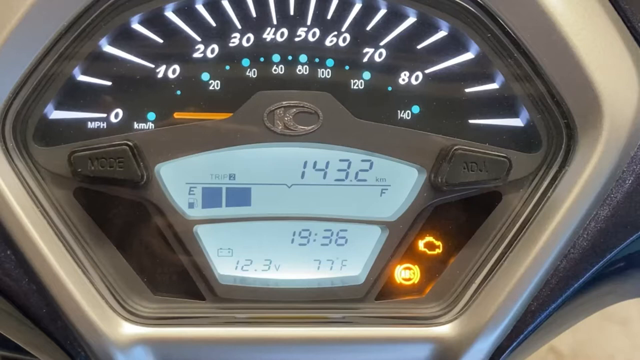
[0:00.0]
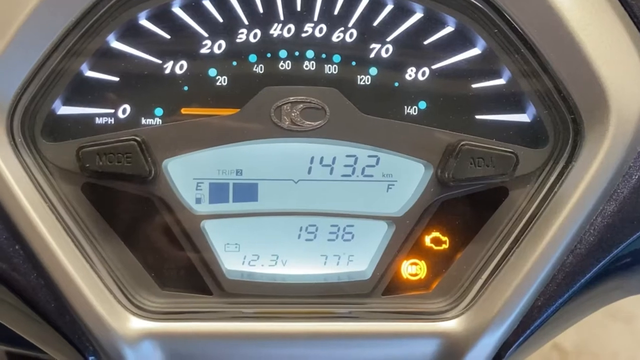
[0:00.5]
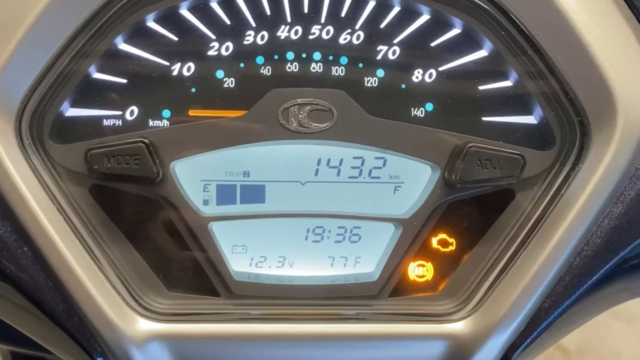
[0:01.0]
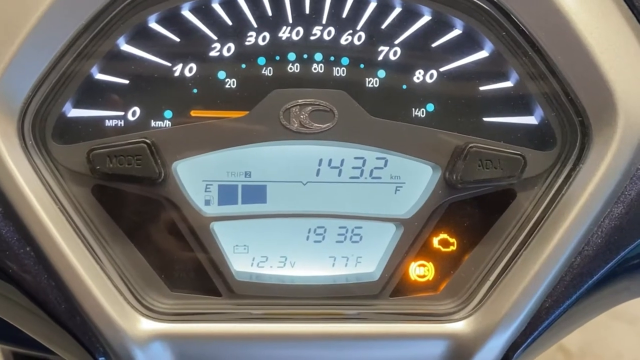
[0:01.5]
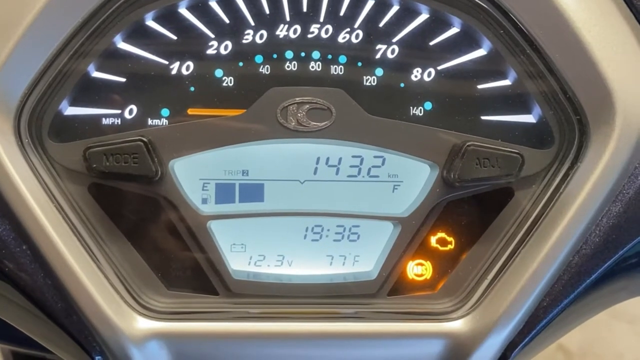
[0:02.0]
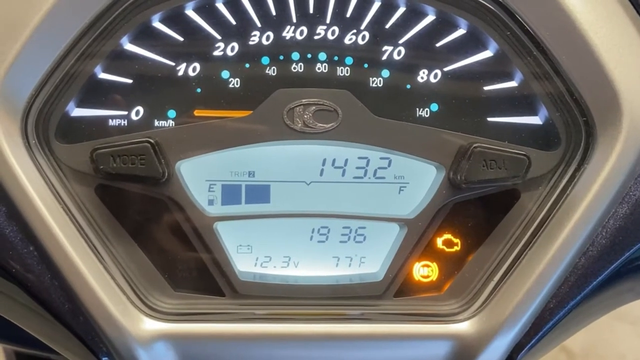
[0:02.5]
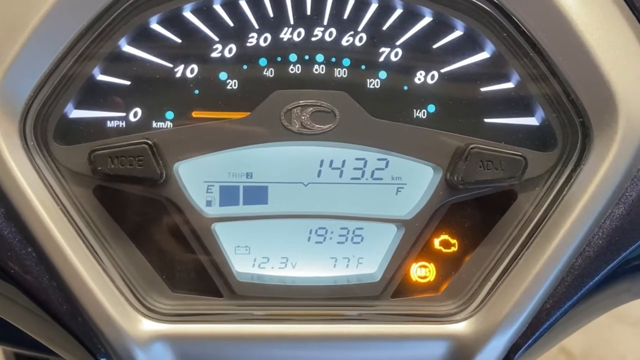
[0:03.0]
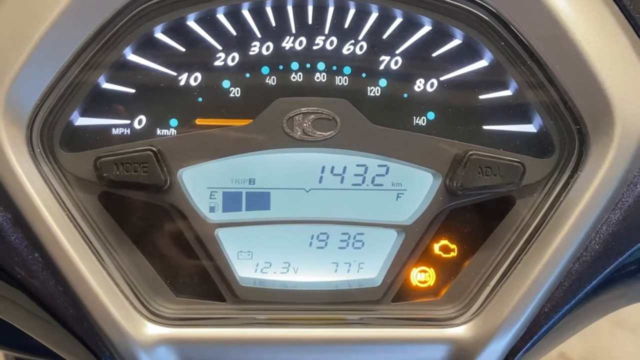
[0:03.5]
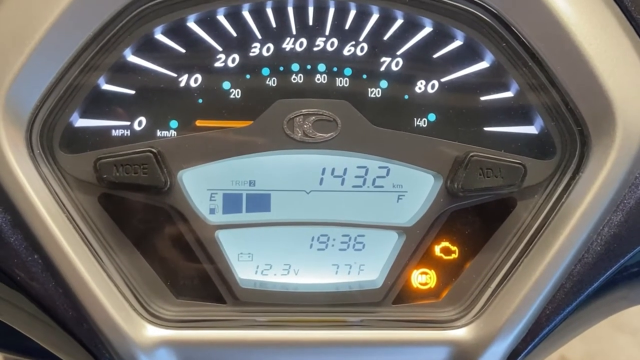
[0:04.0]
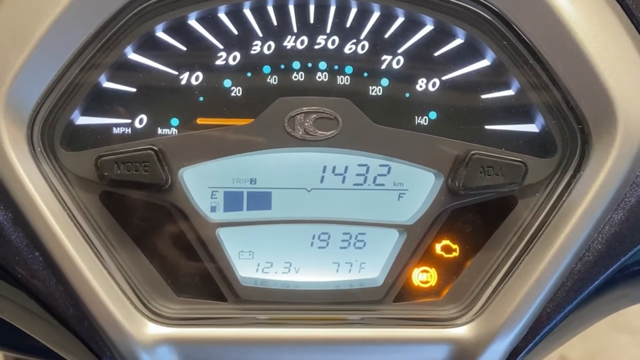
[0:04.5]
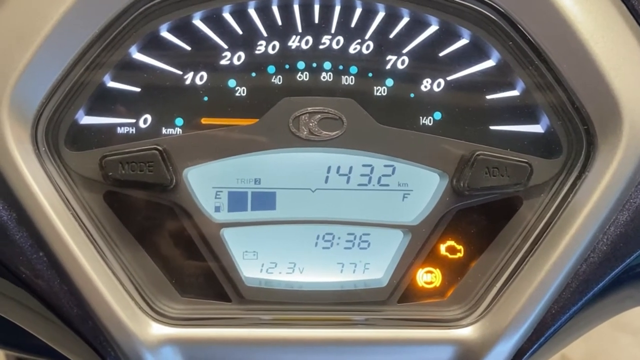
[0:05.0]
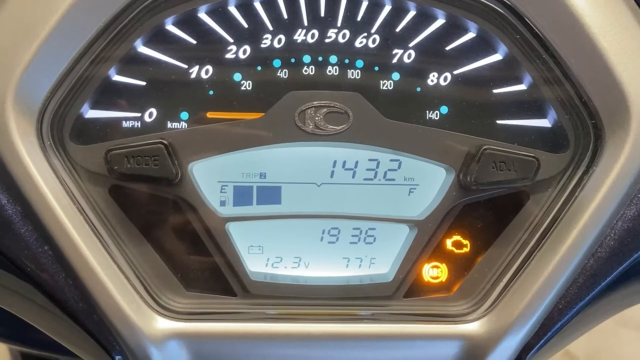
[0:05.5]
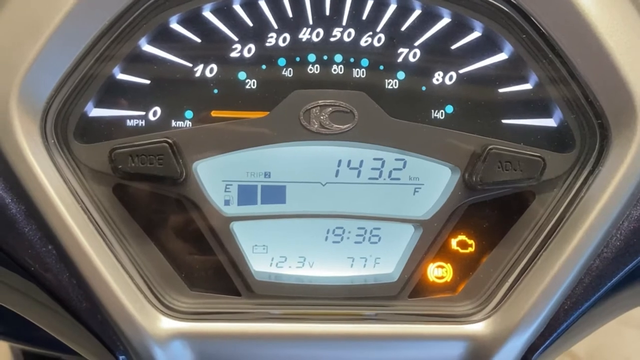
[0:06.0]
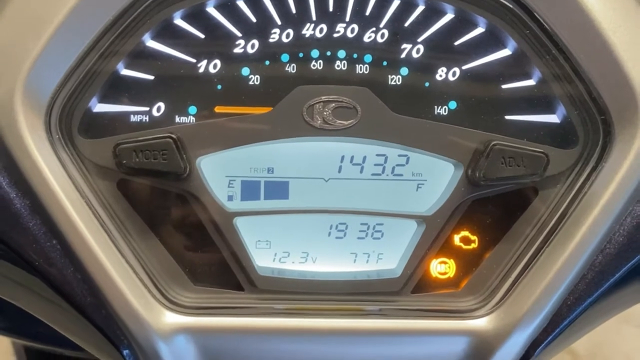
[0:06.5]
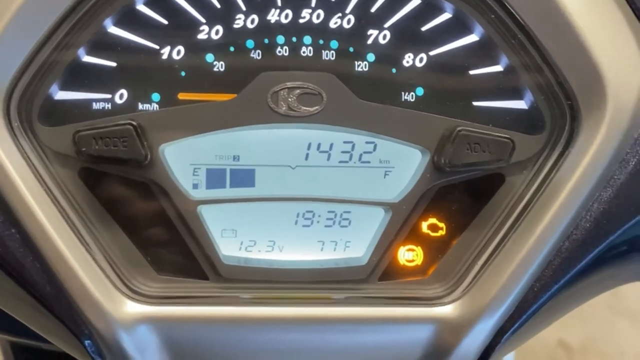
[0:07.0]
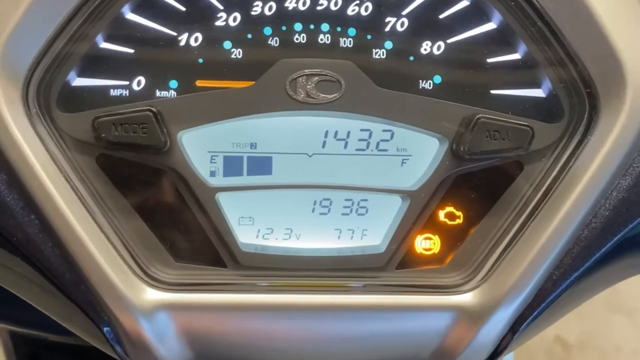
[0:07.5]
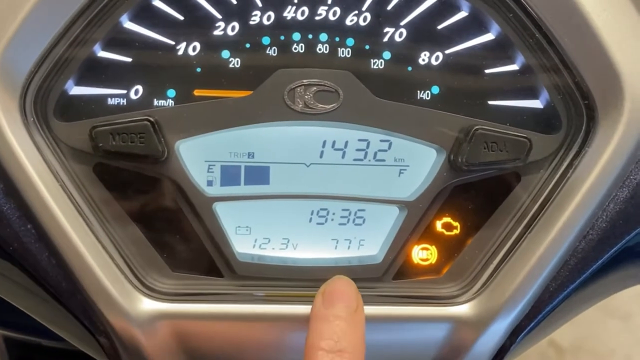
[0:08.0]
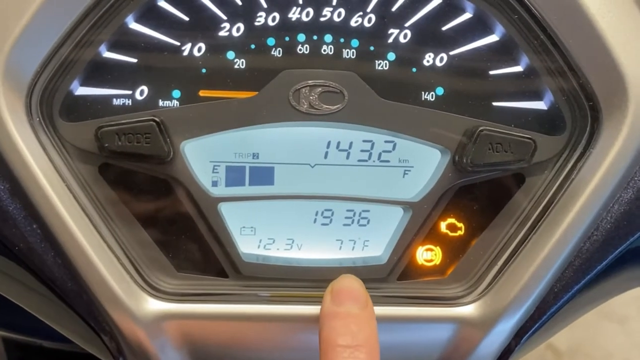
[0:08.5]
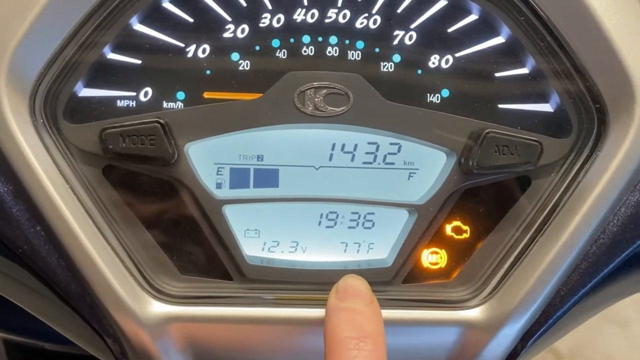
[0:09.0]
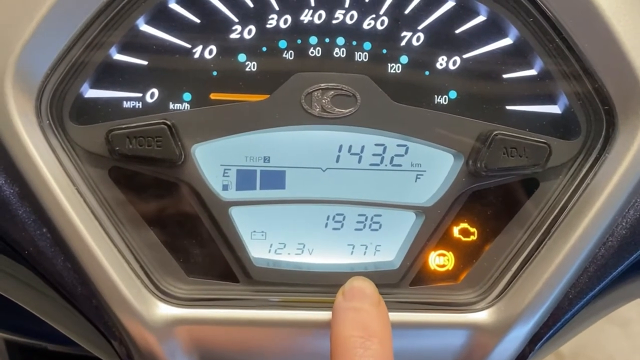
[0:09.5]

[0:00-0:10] The view is zoomed in on a speedometer, apparently inside a vehicle. Across the top of the speedometer area the scale starts at 0 on the far left; underneath the 0 it says "MPH", and to the right of the 0 on the far left it says "KM/H". Next to each number is a large bright white light. The white numbers run 0, 10, 20 and on up to 80 in a sort of rainbow shape. Underneath them, for kilometers per hour, are little blue circular dots with numbers from 20 up to 140, in the same rainbow shape beneath the white numbers. The camera sort of focuses on the speedometer. Below it the time is shown in military time as 1936. A finger appears at the very bottom of the frame, pointing toward the time.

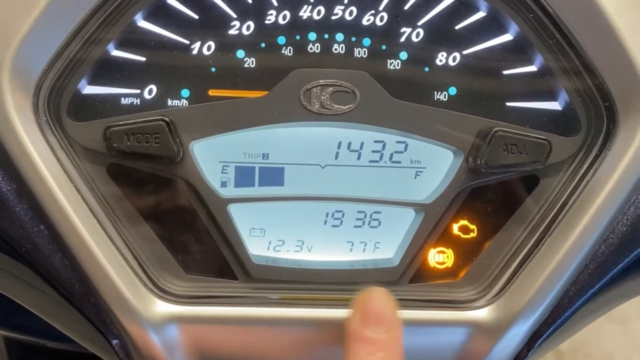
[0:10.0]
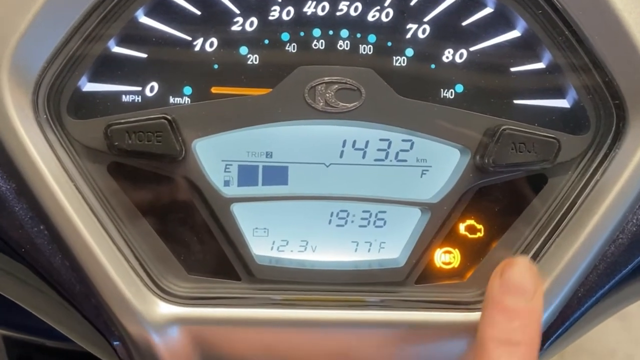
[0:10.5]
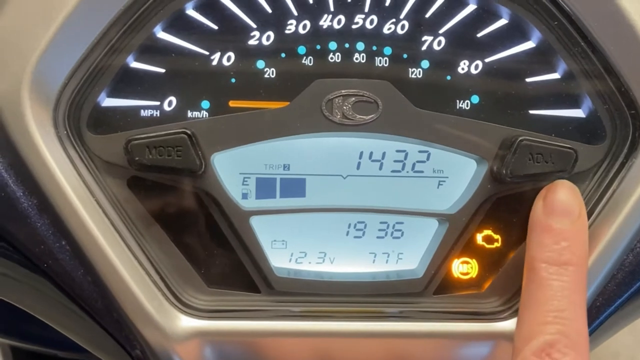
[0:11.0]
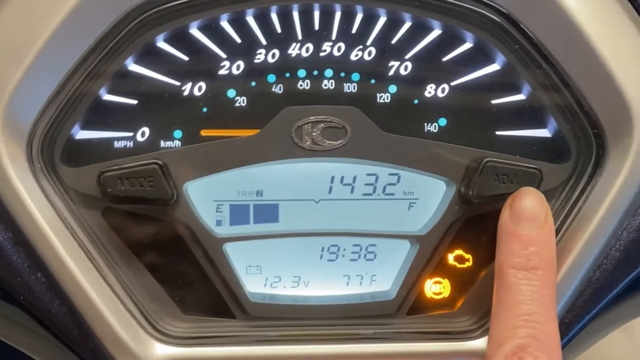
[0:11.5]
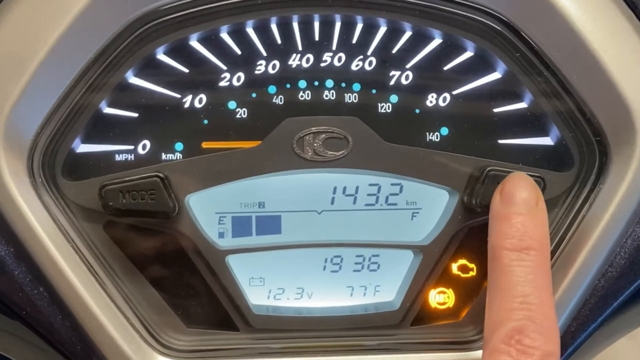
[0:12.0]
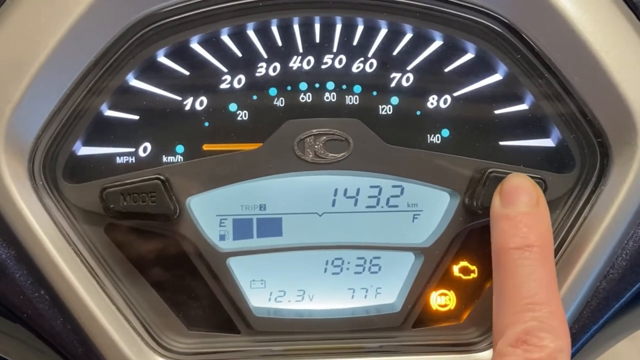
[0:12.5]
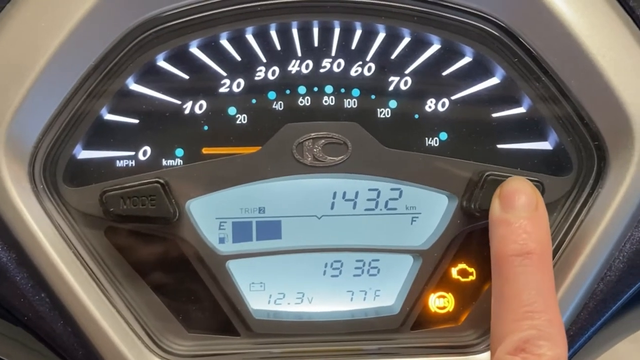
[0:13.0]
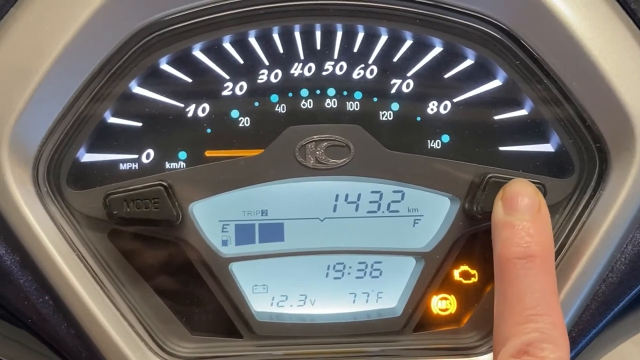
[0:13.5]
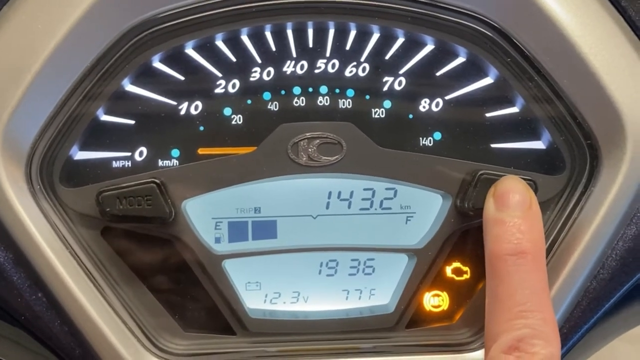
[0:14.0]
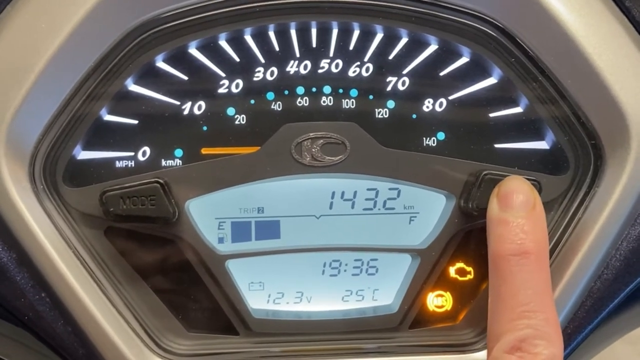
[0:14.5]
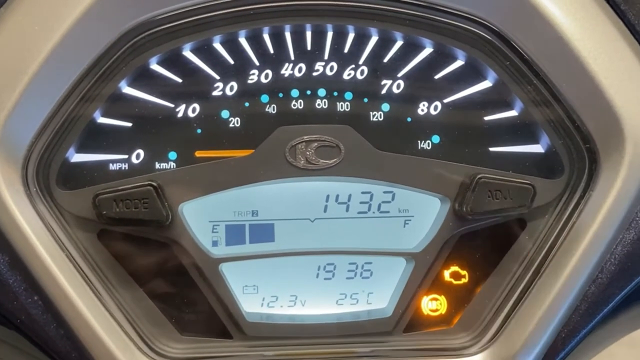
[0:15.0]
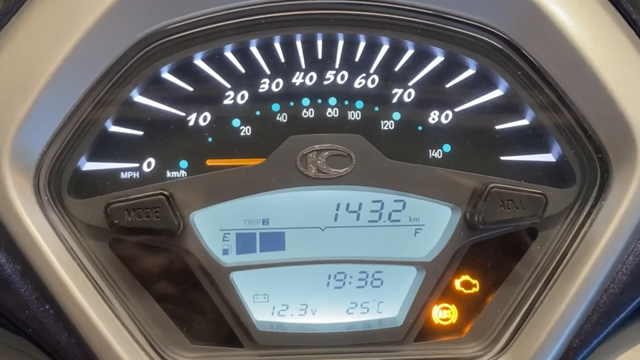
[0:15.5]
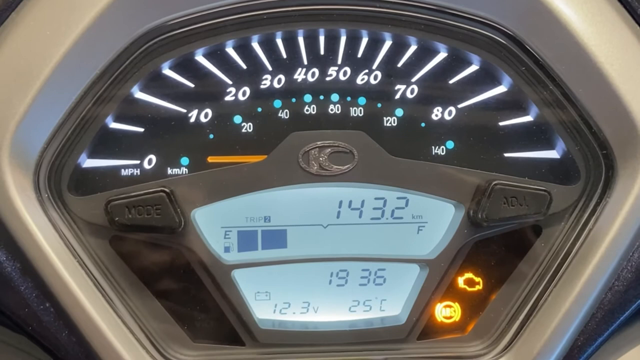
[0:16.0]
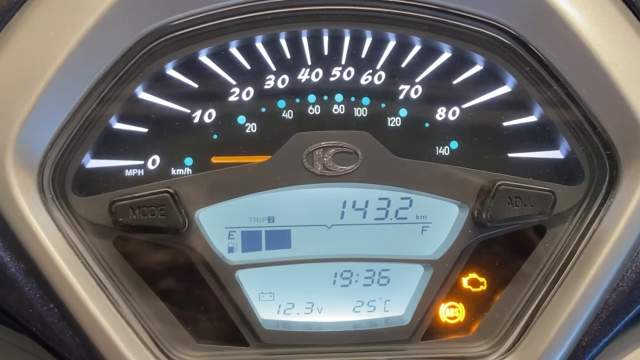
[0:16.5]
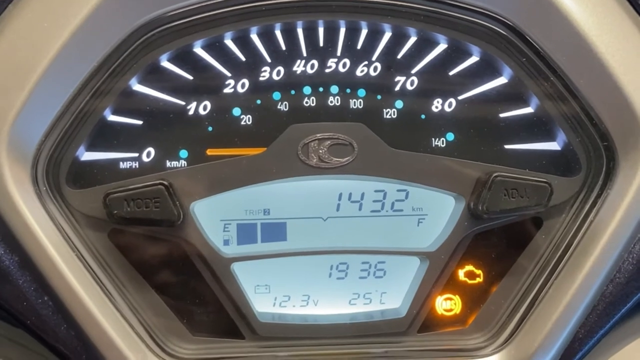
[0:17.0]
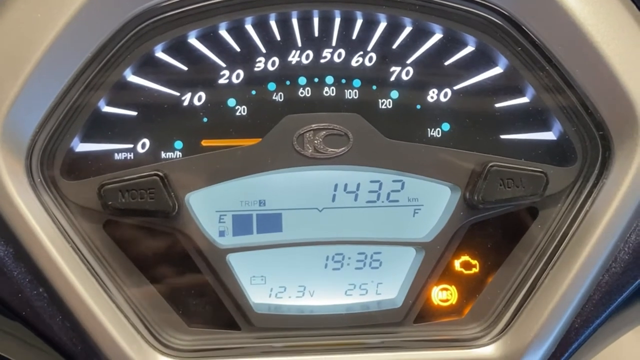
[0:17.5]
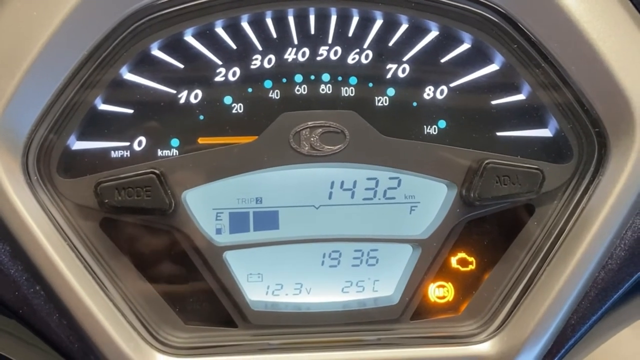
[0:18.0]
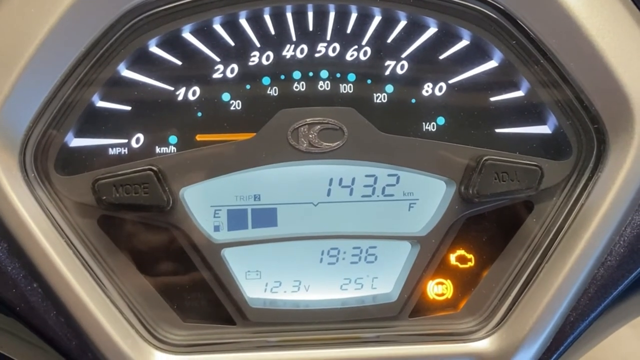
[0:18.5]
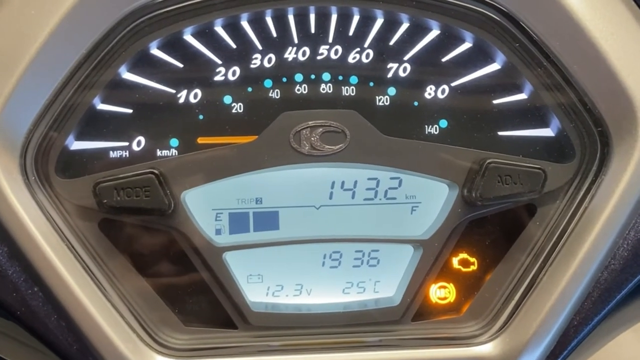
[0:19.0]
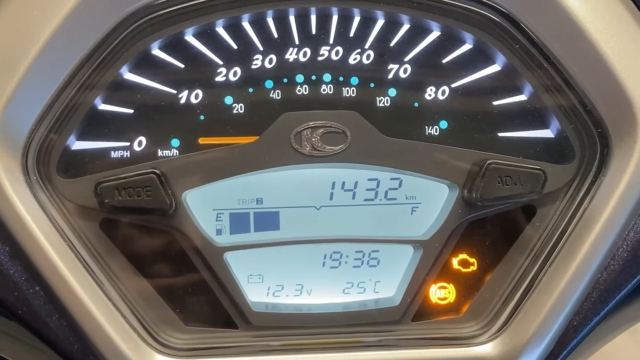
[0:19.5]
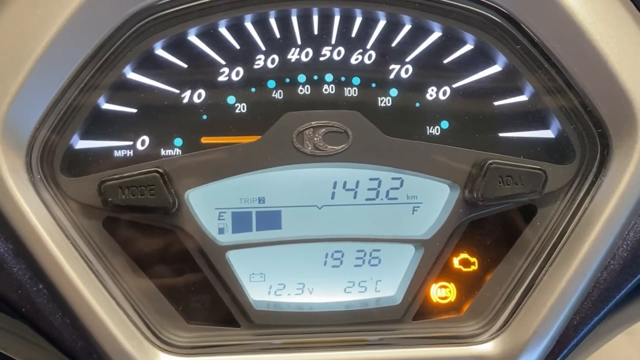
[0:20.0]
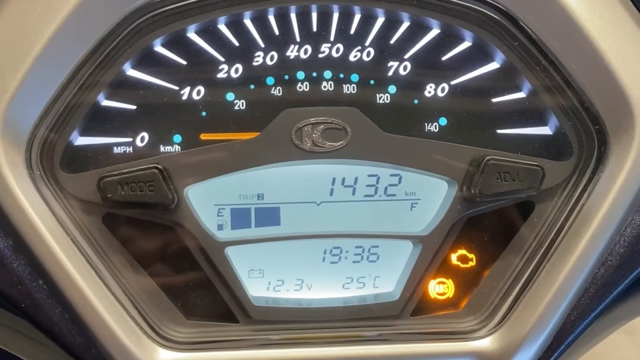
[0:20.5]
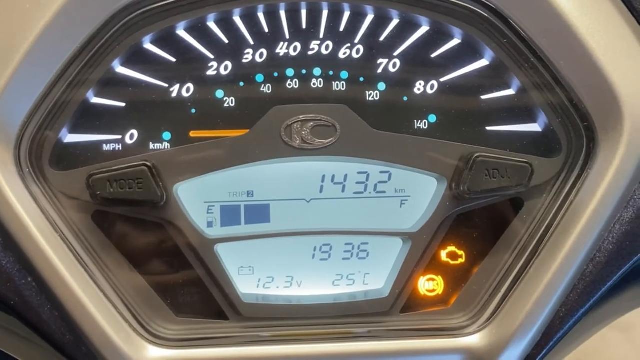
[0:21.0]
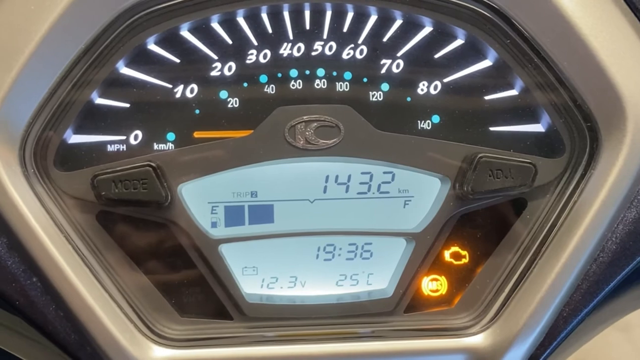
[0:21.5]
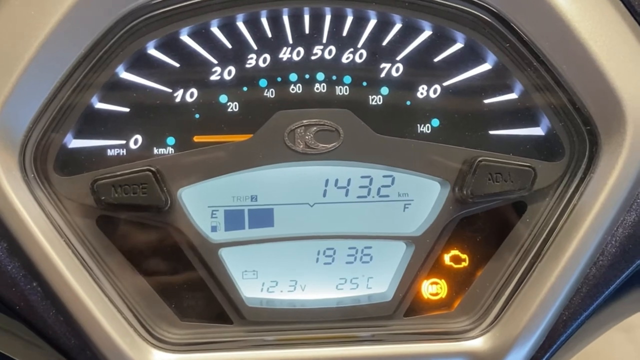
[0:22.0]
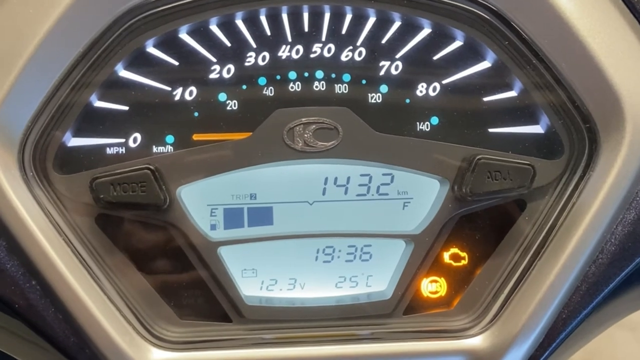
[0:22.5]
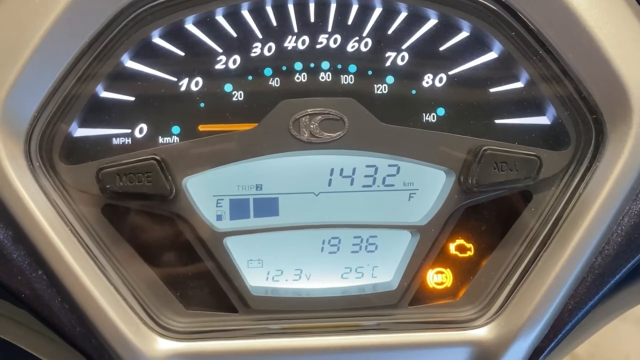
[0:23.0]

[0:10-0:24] The same sort of speedometer appears directly in front of the camera. Someone's finger at the very bottom of the frame points to sections of the speedometer. It points toward the far right, where a sort of icon appears on a black switch. The finger has a white skin tone; it presses the button and then moves out of the camera view. The speedometer has a sort of digital pad in the middle of the bottom. The time is shown in military time as 1936. Underneath that it reads 25 C, and on the far left is apparently the voltage, 12.3 V. Above that are numbers such as 143.2 Km, and a large E symbol for the gas, which appears to be about 70% full. On the left is another black plastic button similar to the one on the right; this one says "mode".